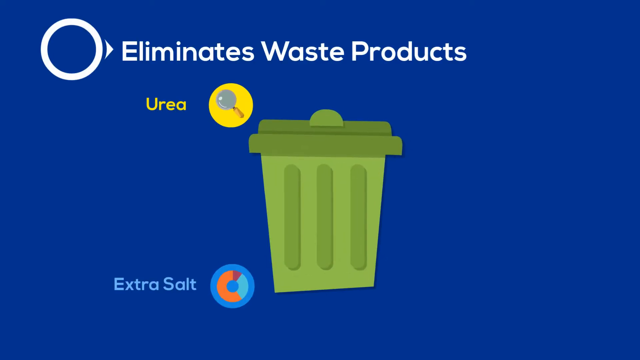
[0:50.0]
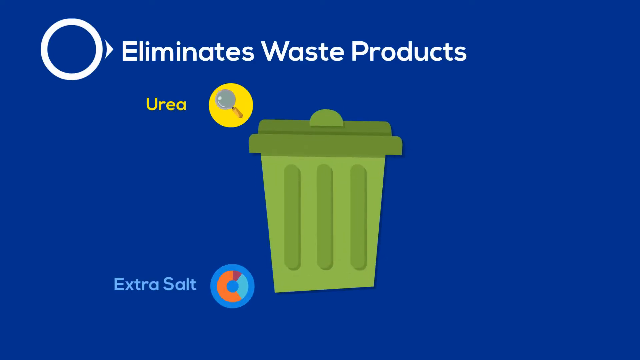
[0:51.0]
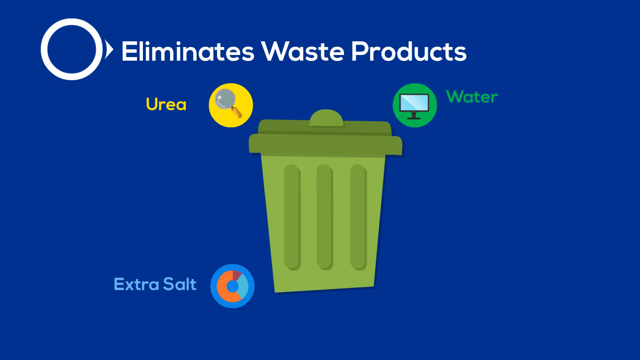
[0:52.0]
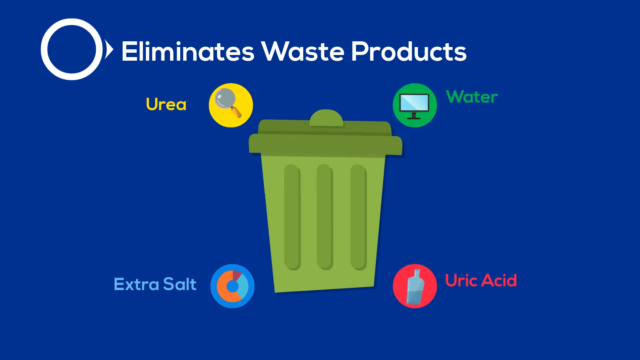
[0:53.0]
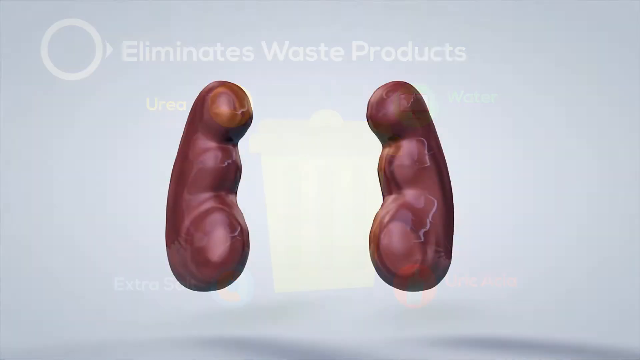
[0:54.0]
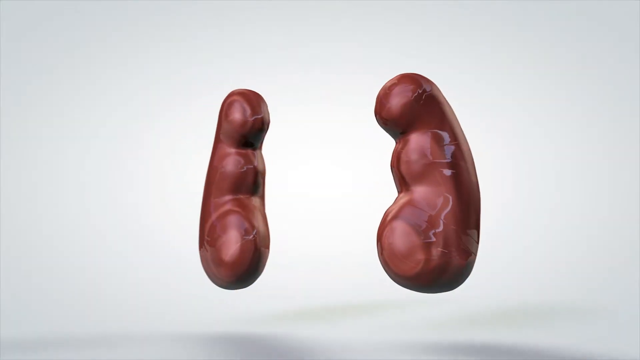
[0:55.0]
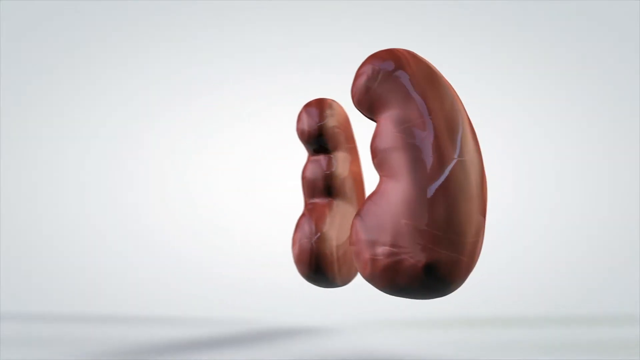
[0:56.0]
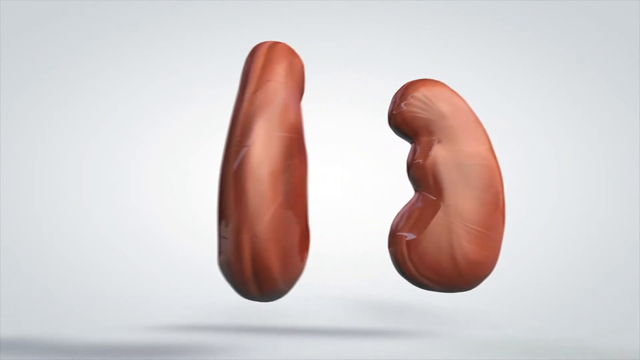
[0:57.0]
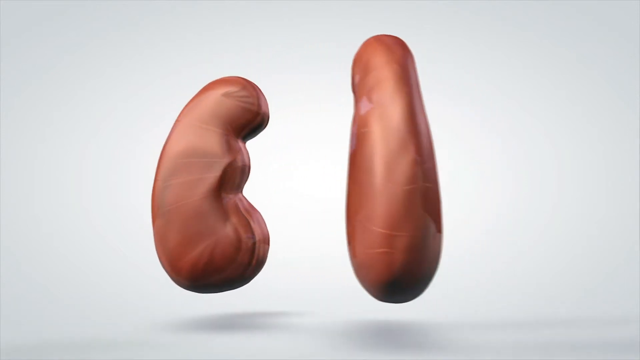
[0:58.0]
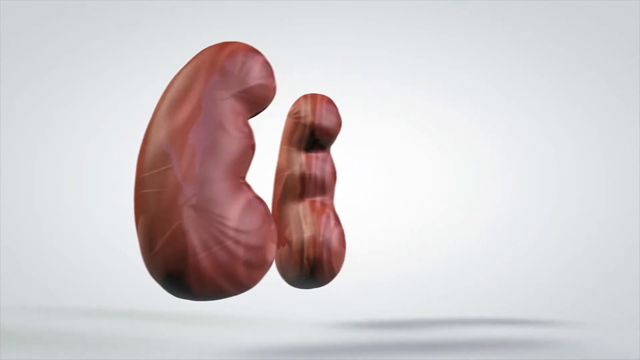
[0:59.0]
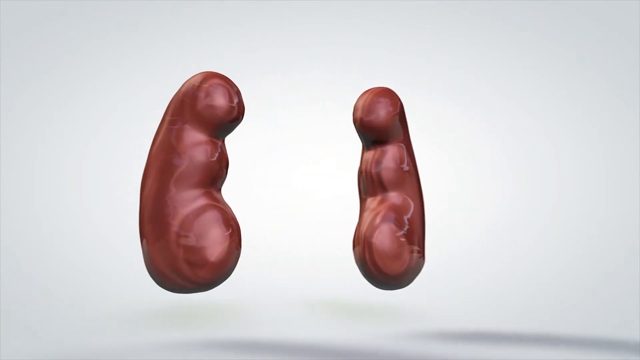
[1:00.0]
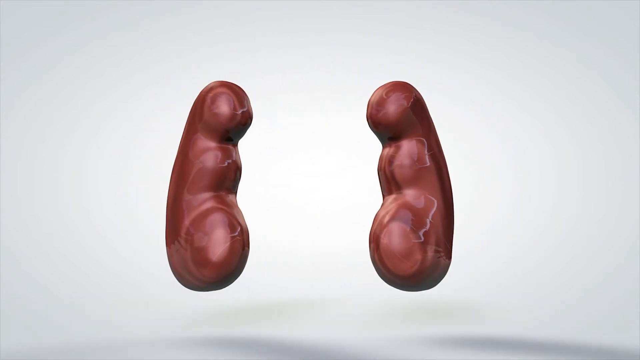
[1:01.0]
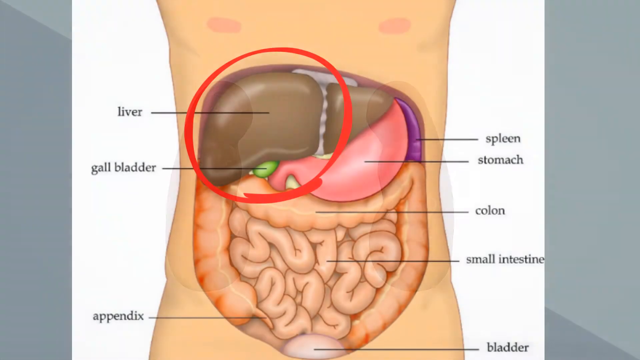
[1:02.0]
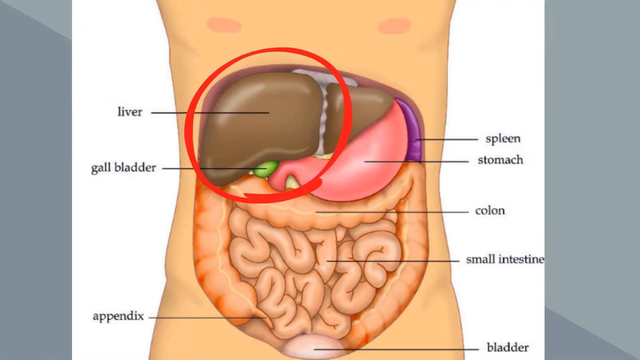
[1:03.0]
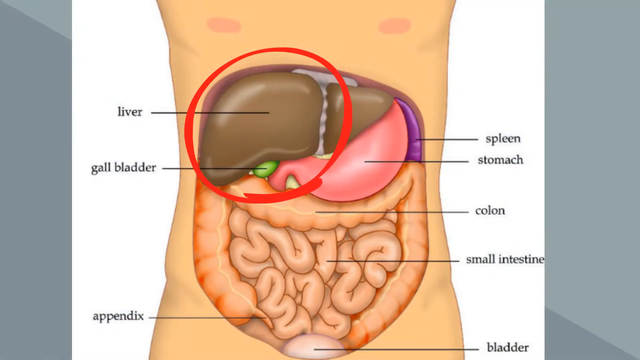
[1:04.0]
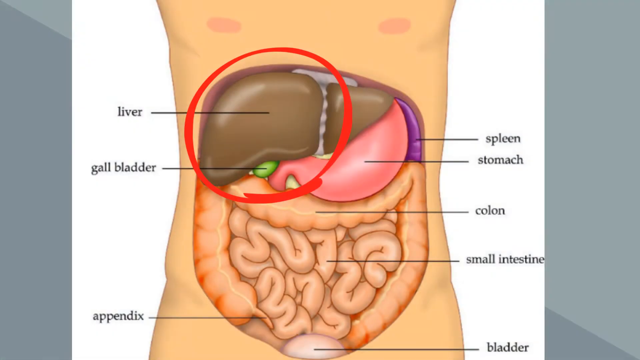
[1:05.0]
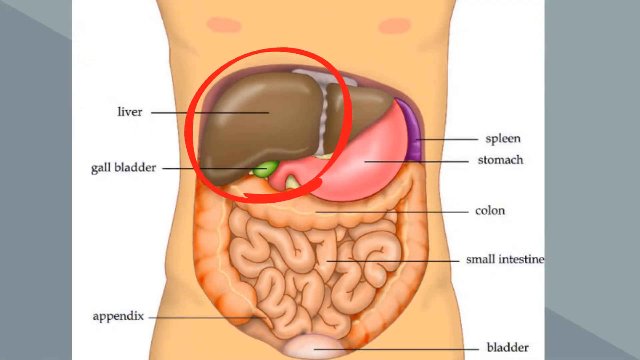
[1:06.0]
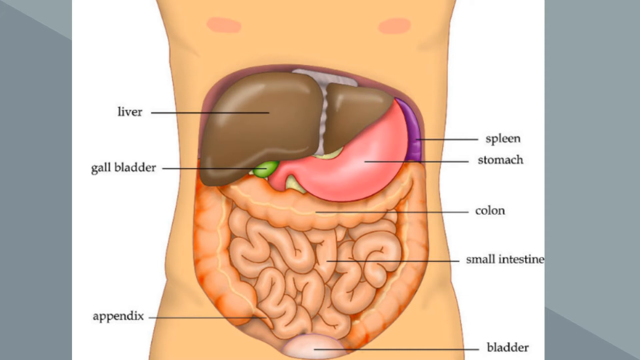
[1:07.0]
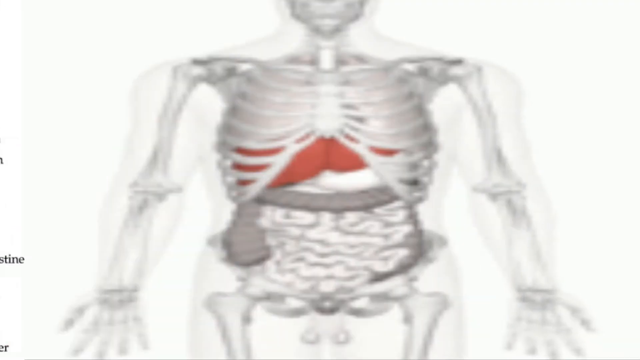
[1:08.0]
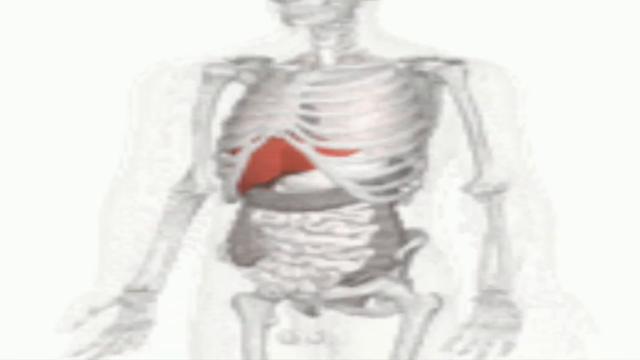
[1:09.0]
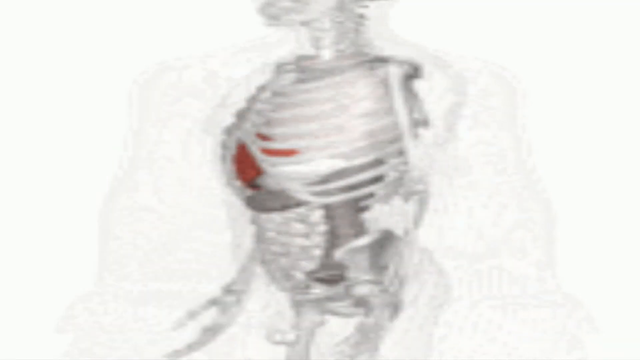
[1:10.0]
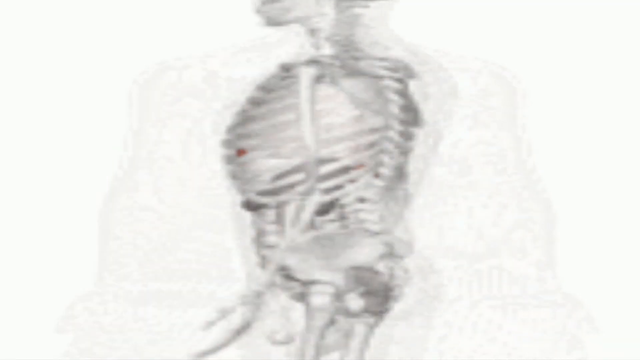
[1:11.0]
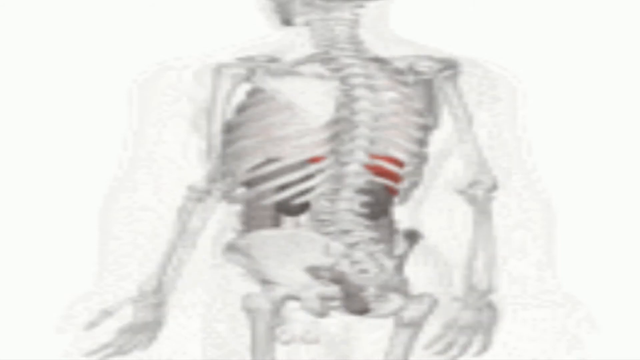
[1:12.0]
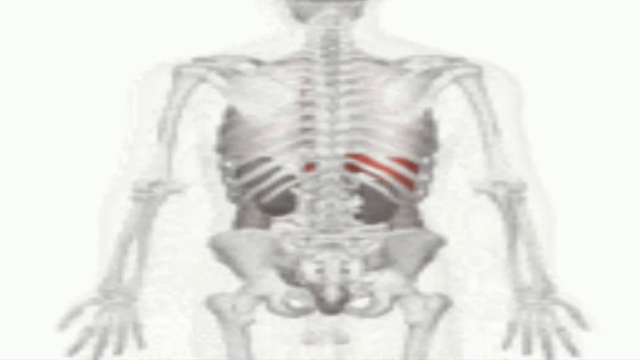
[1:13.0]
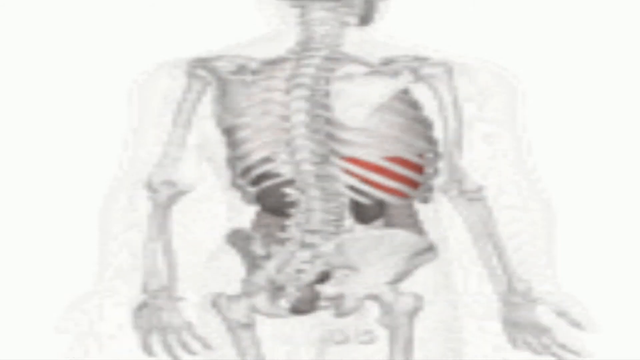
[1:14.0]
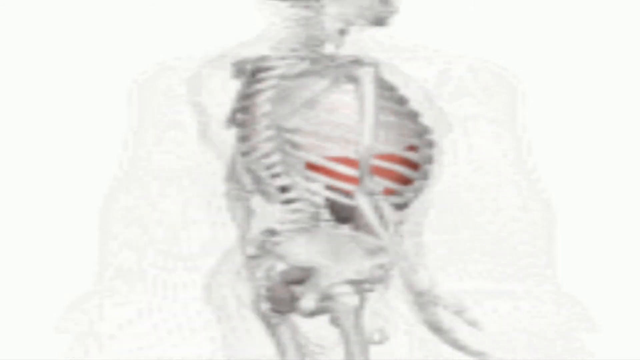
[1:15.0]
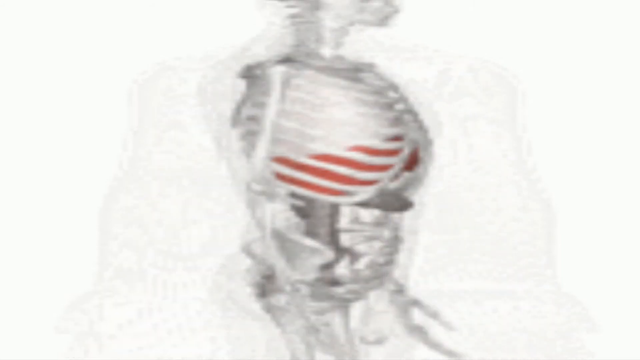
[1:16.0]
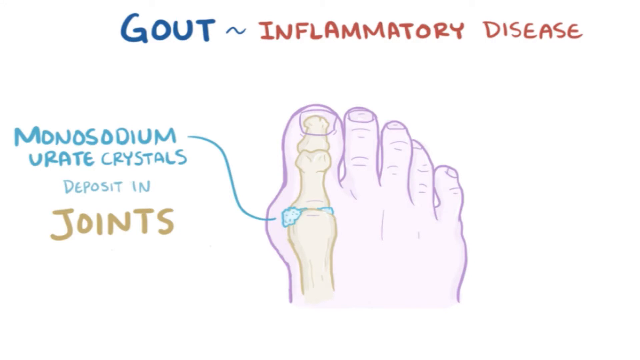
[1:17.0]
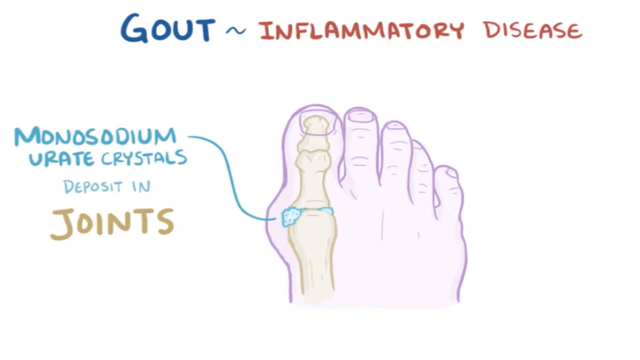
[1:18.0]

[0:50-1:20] A diagram shows a green bin labelled "eliminate waste products". There are four drawings on the bin, one at each corner, each with a different label: "urea", "water", "uric acid" and "extra salt". The screen then shows the two 3D kidneys circling on the screen. Next comes the inside of a human body, with the liver, gallbladder, appendix, spleen, stomach, colon and small intestine exposed and labelled, and a circle around the liver and the gallbladder. The video then moves to a skeleton circling on the screen in a clockwise direction. Next is a diagram of a foot in which the big toe shows the bones inside, labelled "monosodium urate crystals deposit in joints", with "gout, inflammatory disease" at the top.